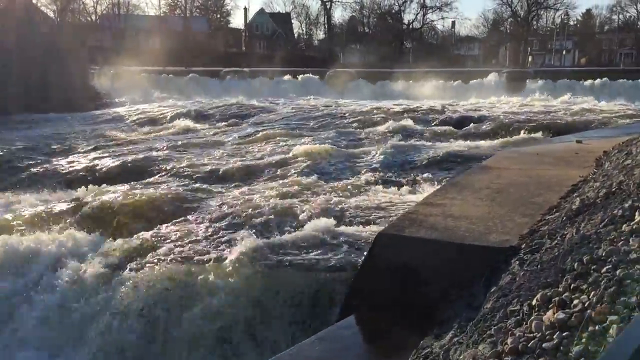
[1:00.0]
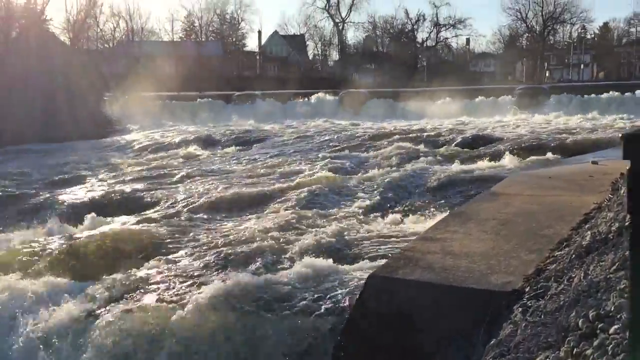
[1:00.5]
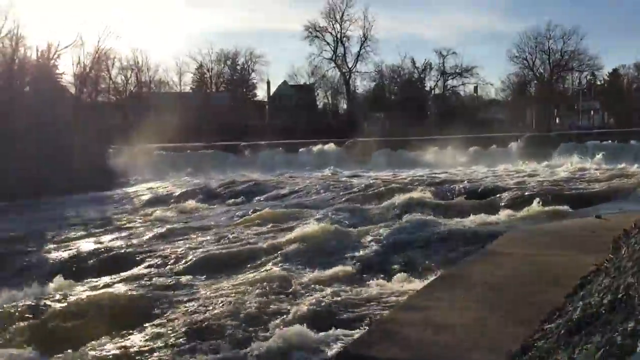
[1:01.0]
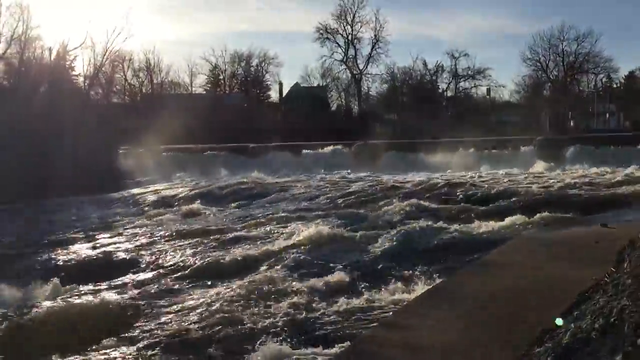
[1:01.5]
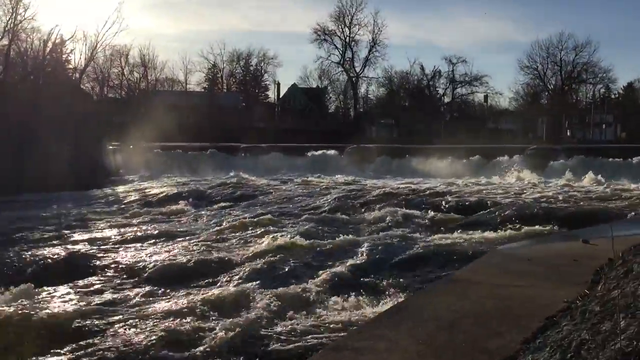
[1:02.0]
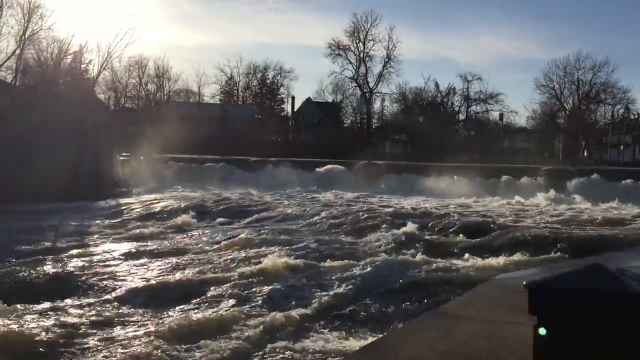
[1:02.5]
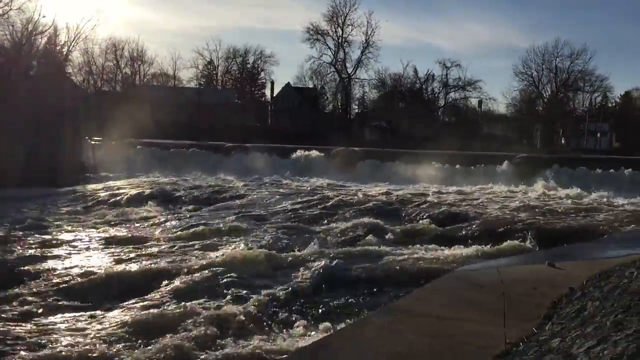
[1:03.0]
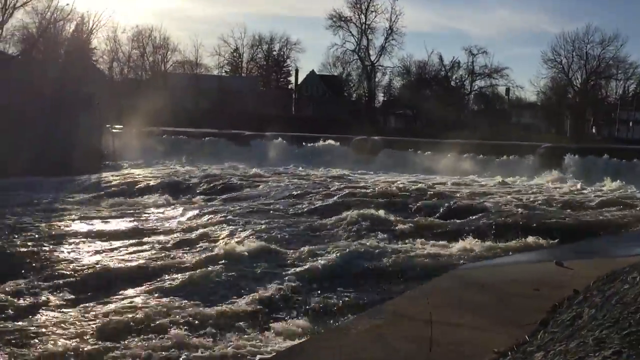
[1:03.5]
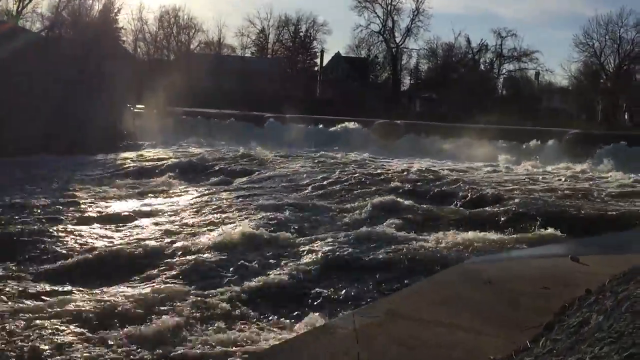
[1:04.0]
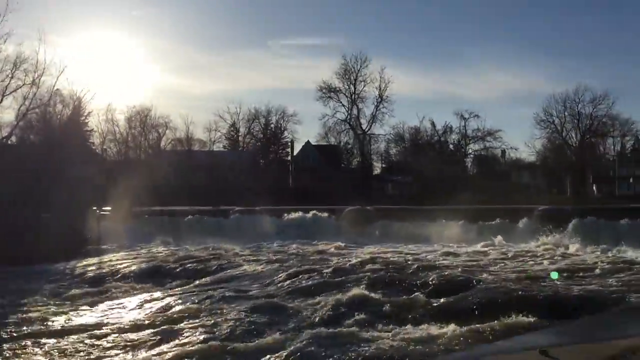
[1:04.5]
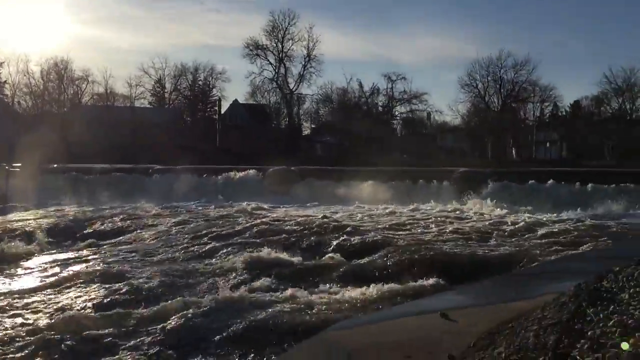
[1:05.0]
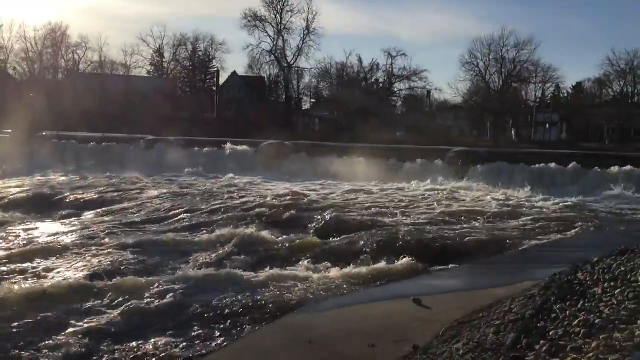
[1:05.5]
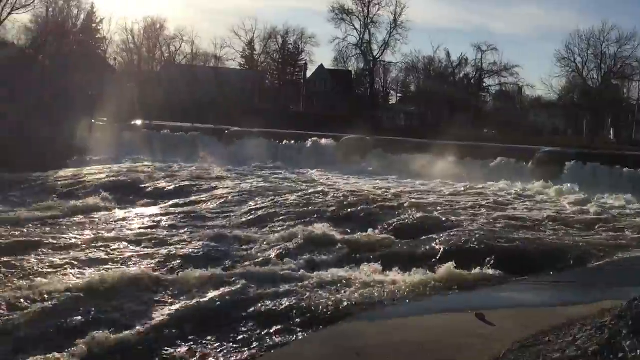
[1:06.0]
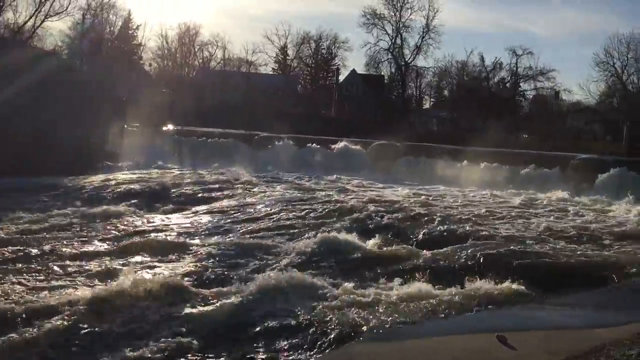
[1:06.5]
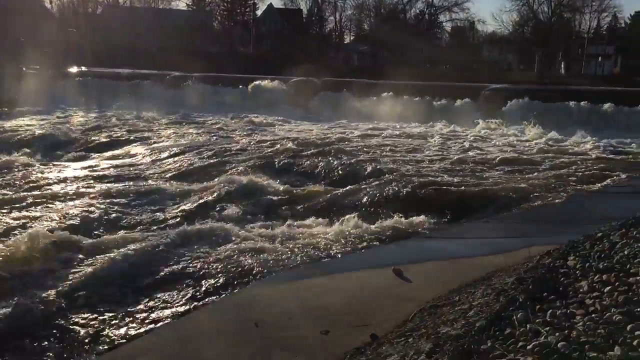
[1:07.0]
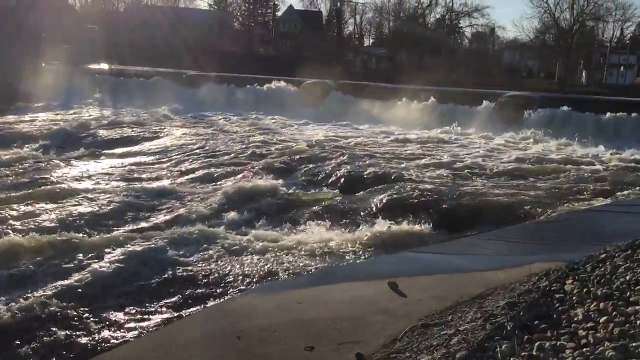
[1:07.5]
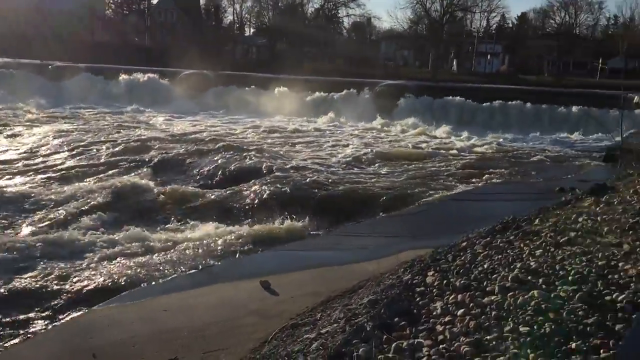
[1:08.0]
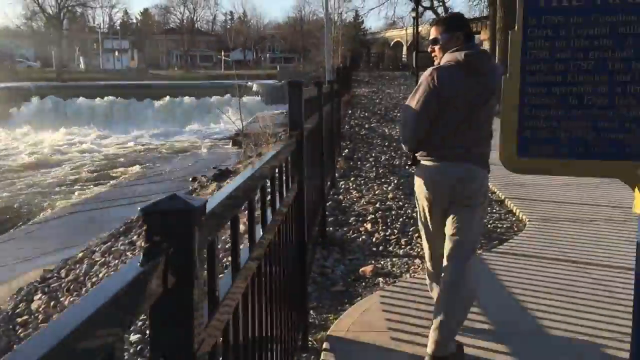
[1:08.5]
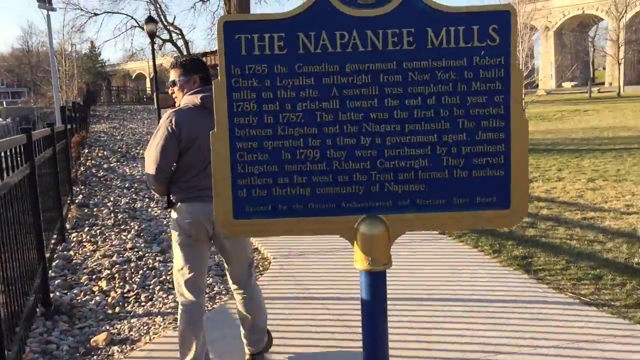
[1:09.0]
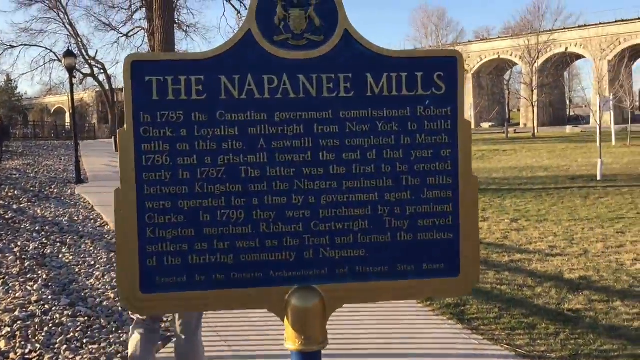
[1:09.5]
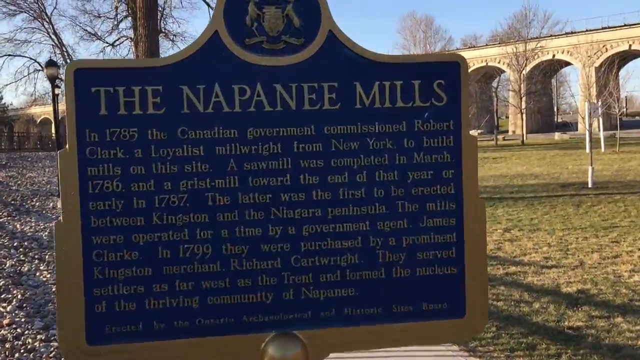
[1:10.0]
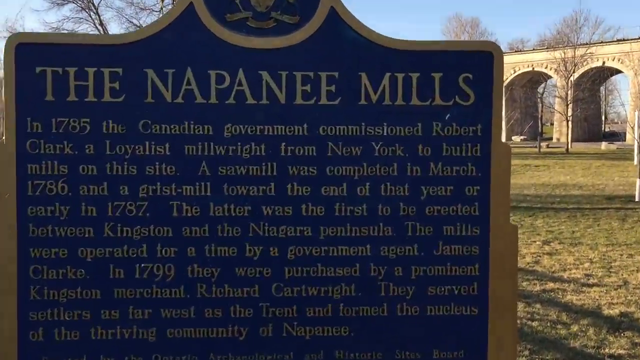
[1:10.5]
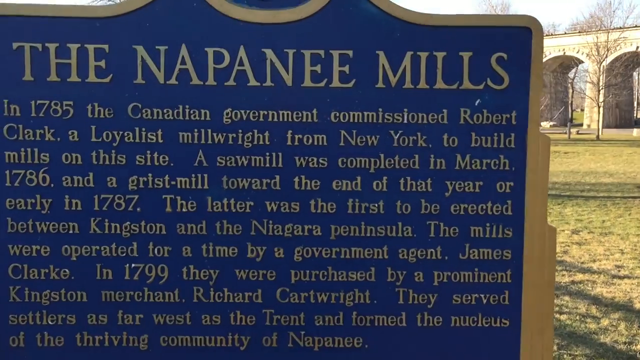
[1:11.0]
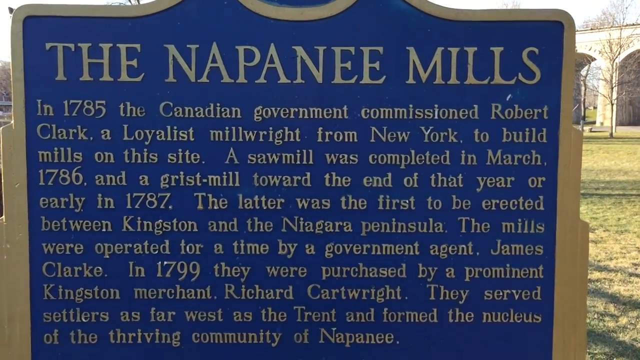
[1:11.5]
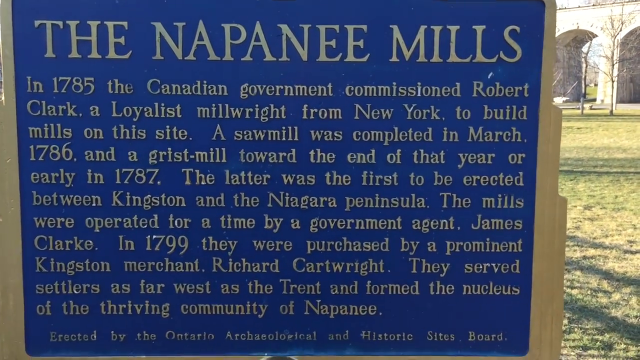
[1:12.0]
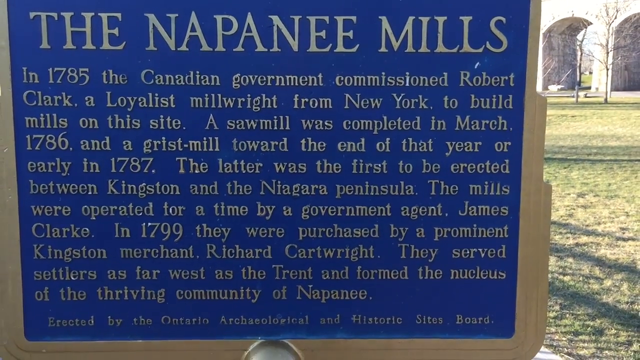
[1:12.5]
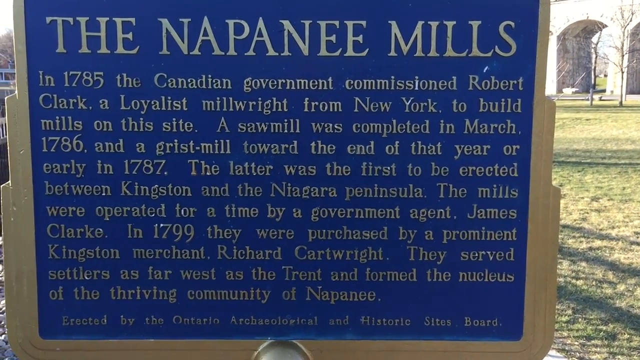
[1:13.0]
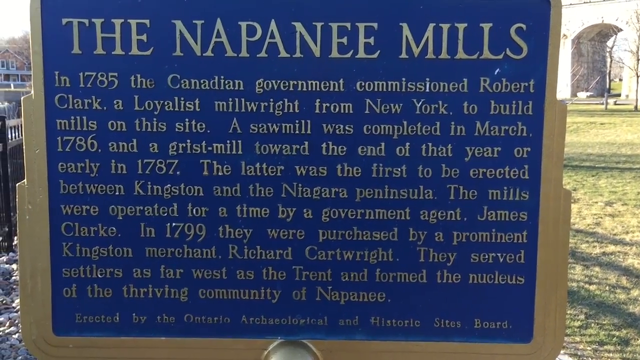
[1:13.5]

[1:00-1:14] Behind the gate, between it and the stone wall where the water is, small rocks form a steep incline, with small pieces of grass growing between them. The bridge is a little clearer and seems to have arches cut out underneath it, with the water seemingly rushing beneath the arches. The person then pans to a sign that says "the Napanee Mills". The text underneath is a bit hard to read; it is about the Canadian government commissioning a man called Robert Clark from New York to build this mill, which was a sawmill.